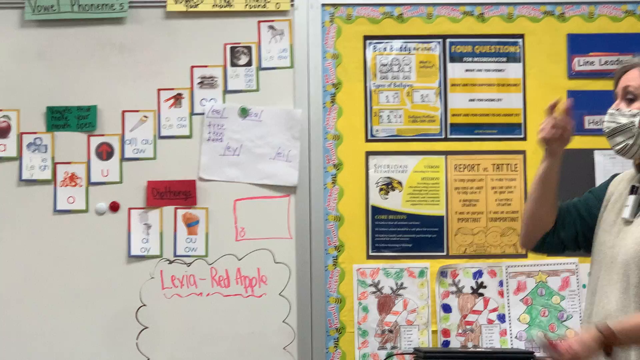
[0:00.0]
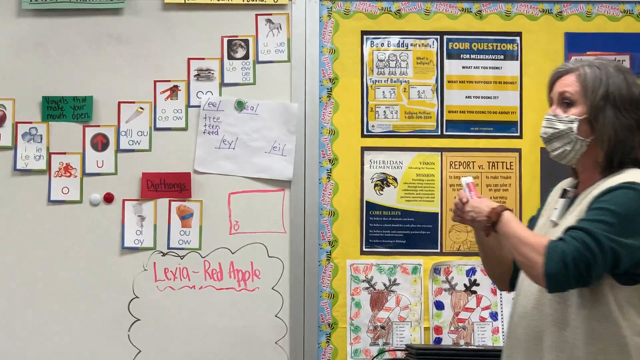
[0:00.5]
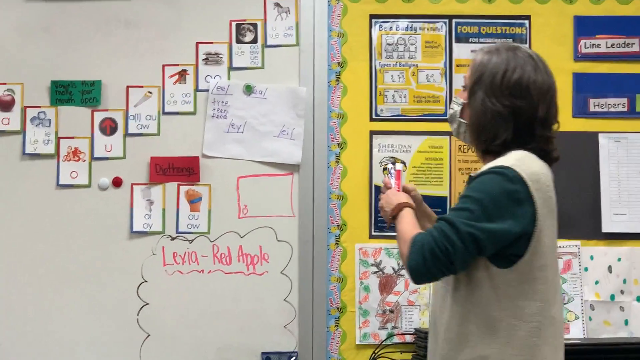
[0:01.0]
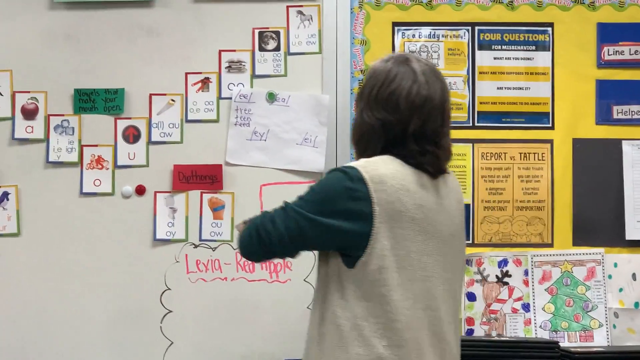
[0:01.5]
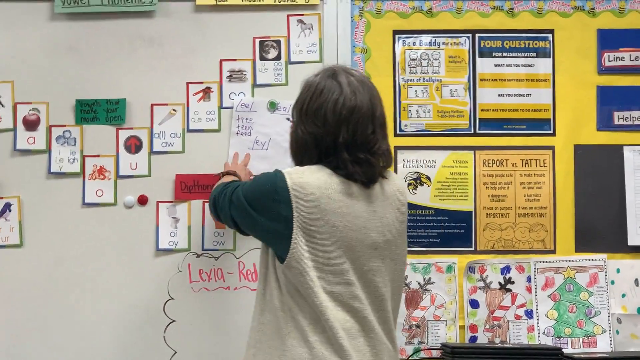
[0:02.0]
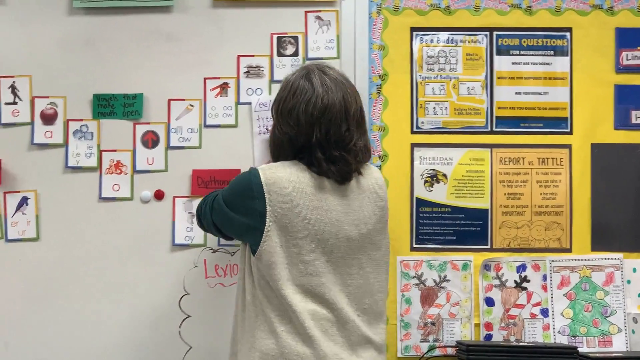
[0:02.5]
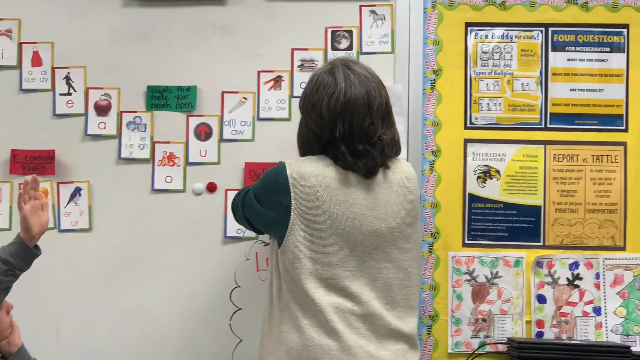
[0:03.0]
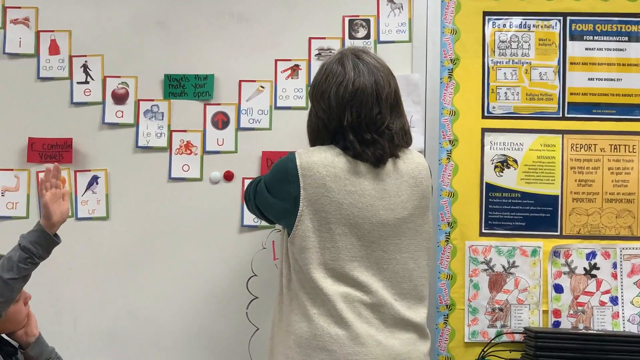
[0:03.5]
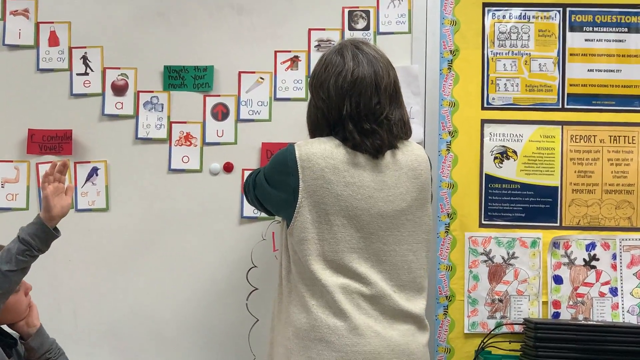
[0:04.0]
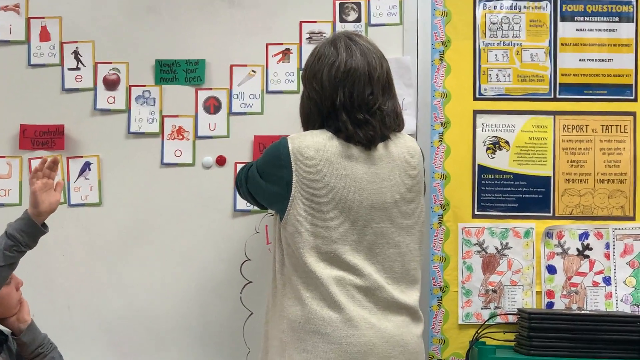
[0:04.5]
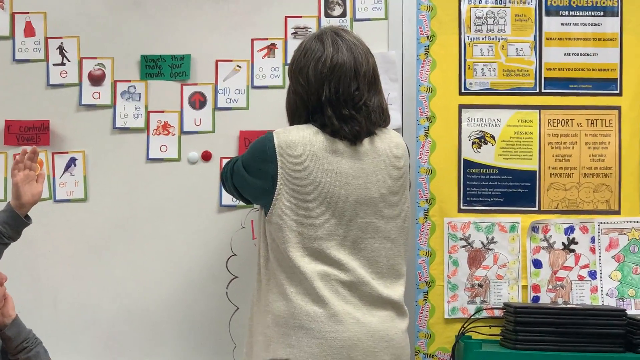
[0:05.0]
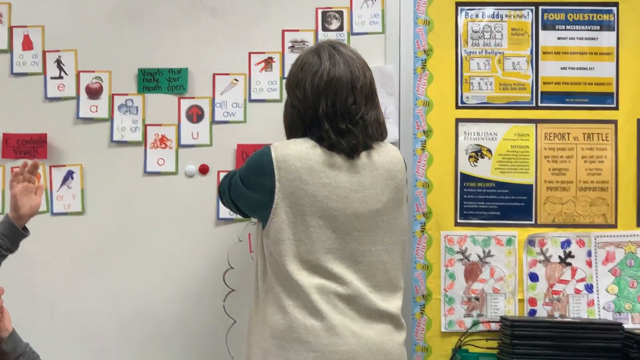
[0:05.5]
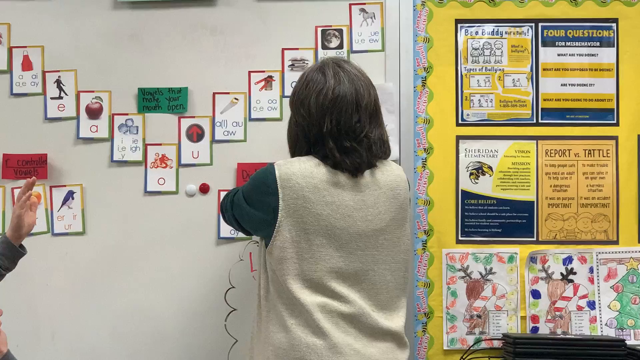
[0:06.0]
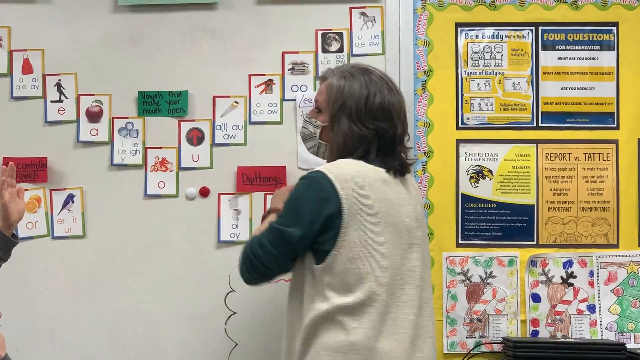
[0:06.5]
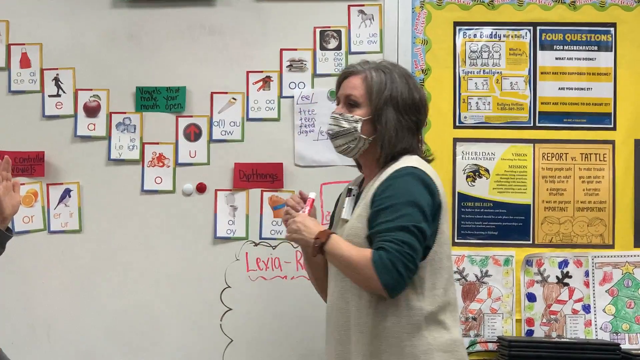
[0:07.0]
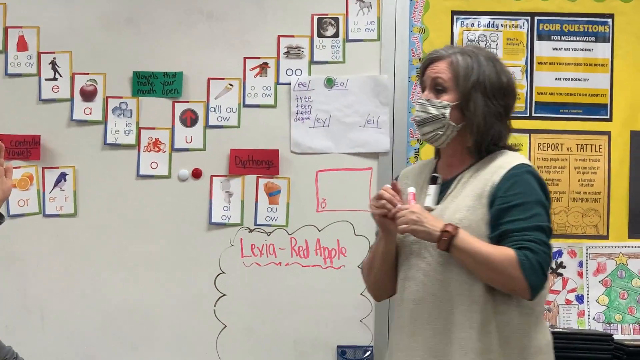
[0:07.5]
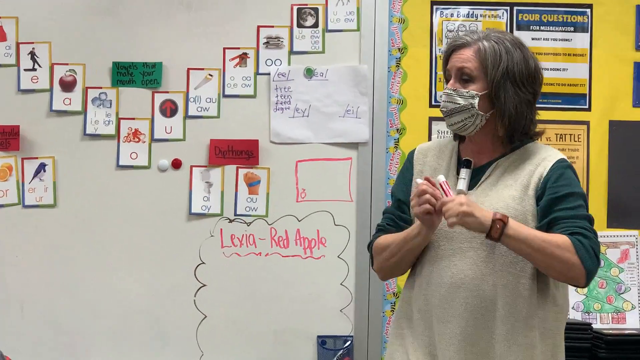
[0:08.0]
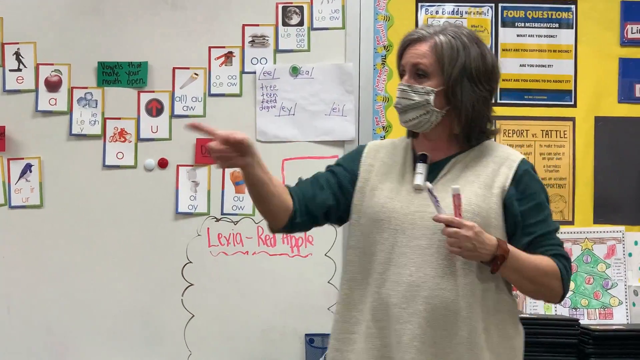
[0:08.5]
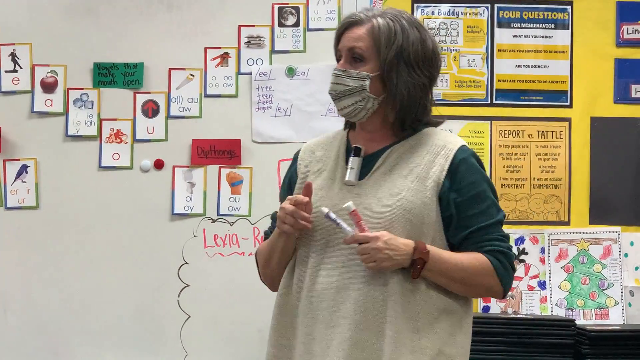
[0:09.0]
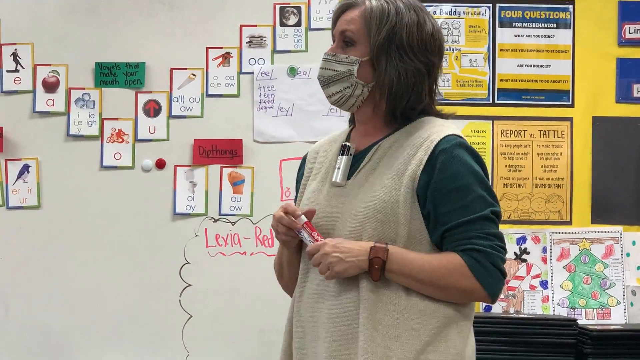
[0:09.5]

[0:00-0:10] A female teacher gives a lesson to a class of people. She wears a microphone and a face mask, along with a jumper and a t-shirt, and has a brown watch on her wrist. She holds two pens in her hands and writes on the whiteboard as she teaches. The whiteboard holds lots of photos and materials that are likely used to assist in teaching. To the right of the whiteboard is a poster board with different posters and drawings on it. Someone else next to the whiteboard has their hand up, likely a pupil with a question. The words "Levia Red Apple" are on the whiteboard, which could suggest a language lesson.